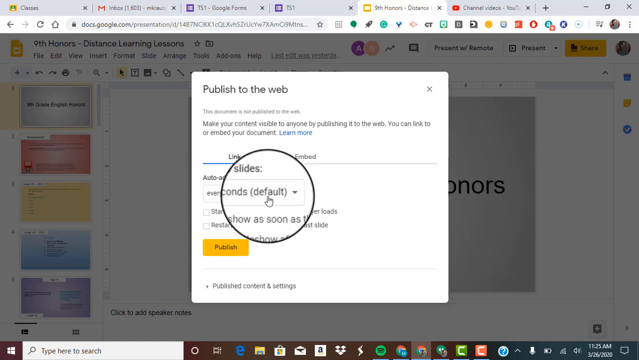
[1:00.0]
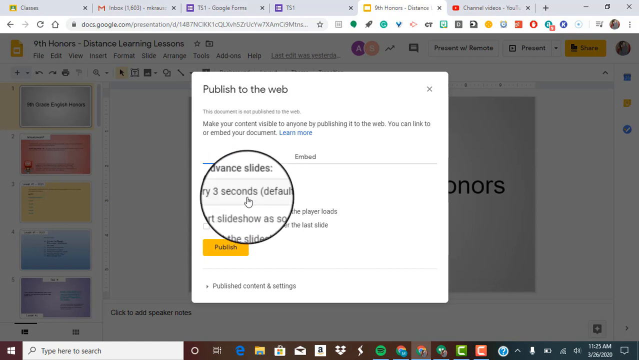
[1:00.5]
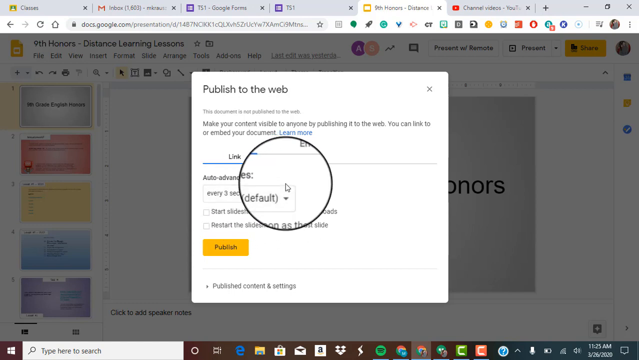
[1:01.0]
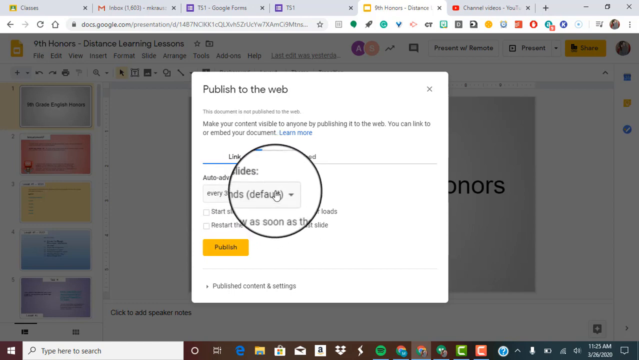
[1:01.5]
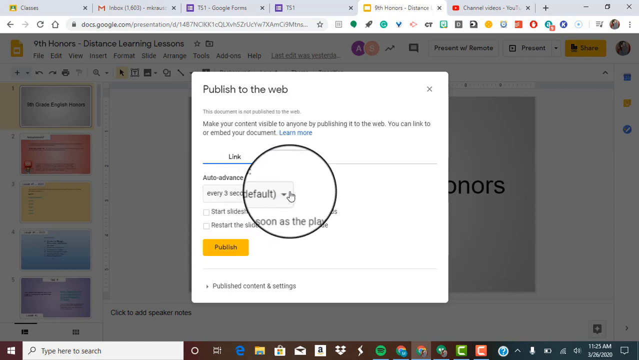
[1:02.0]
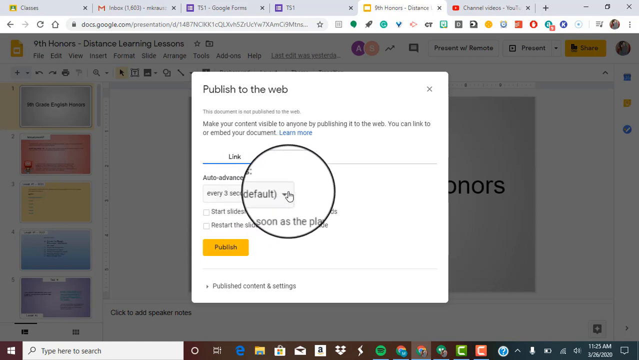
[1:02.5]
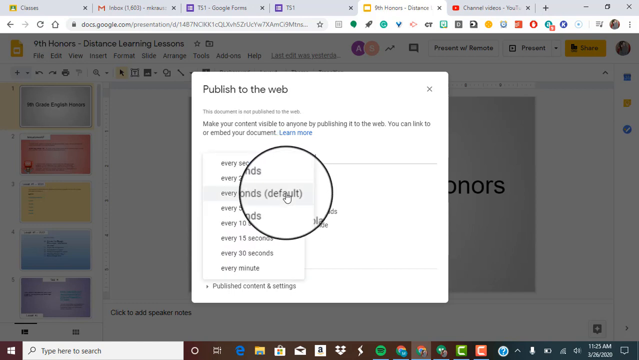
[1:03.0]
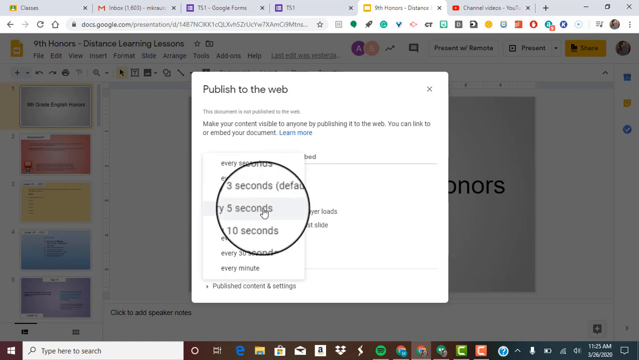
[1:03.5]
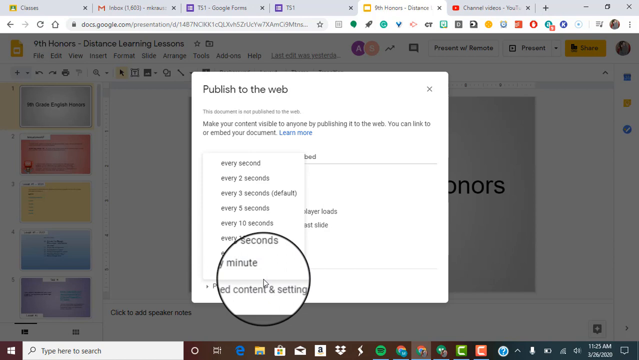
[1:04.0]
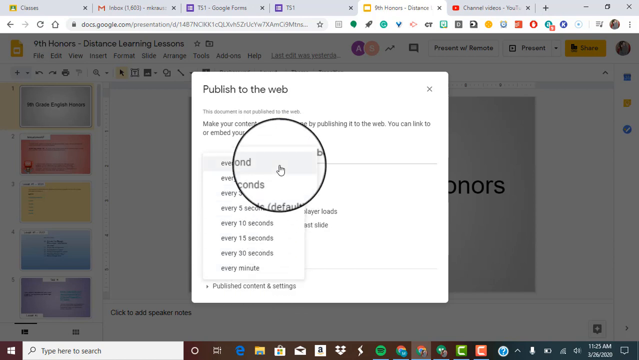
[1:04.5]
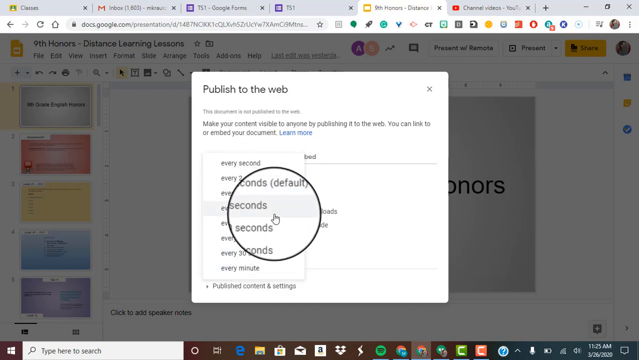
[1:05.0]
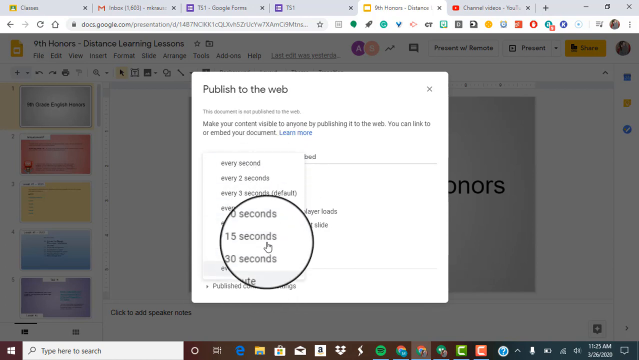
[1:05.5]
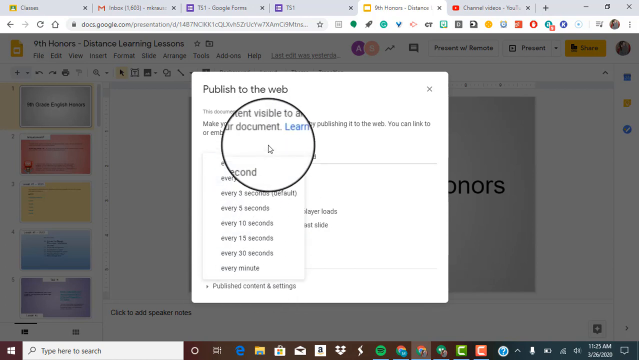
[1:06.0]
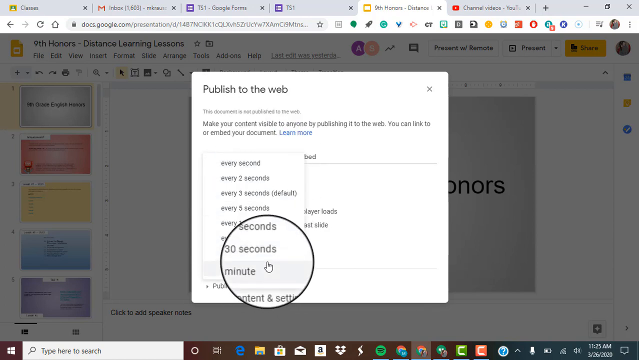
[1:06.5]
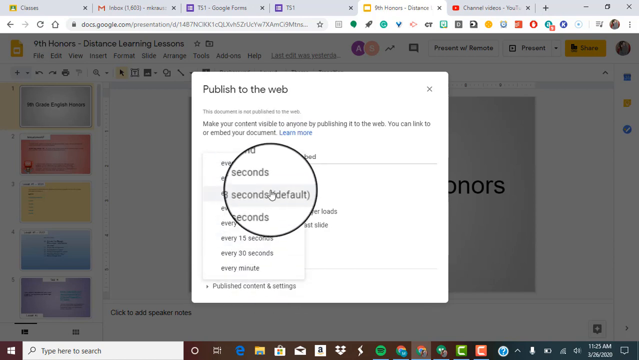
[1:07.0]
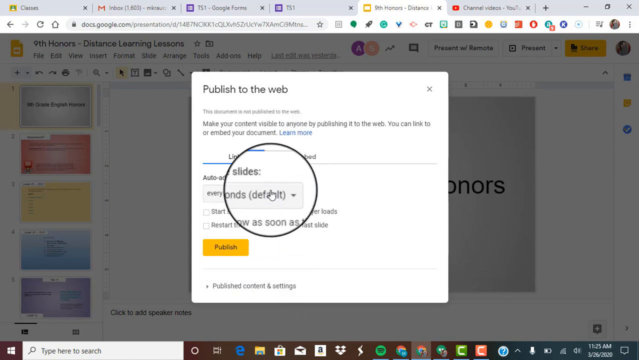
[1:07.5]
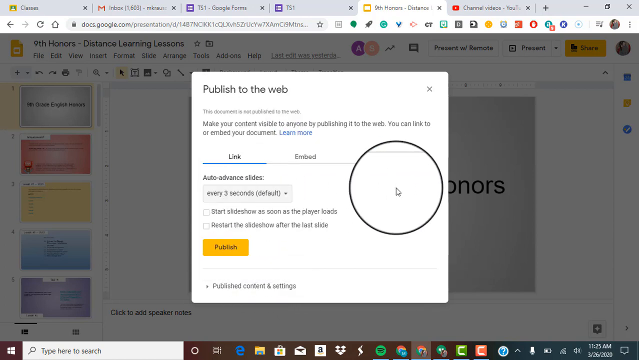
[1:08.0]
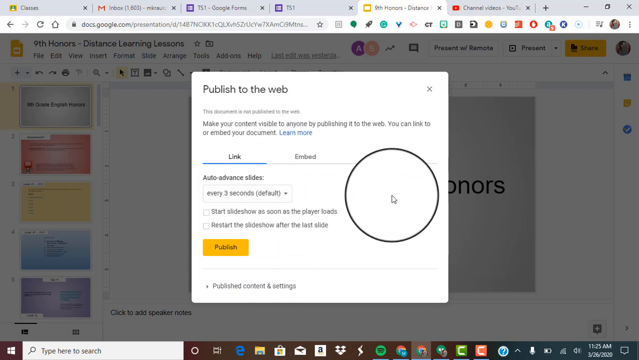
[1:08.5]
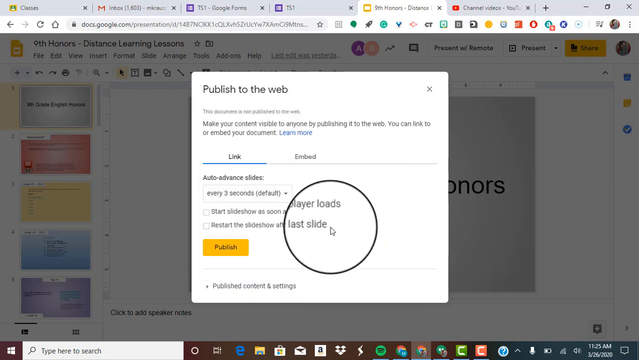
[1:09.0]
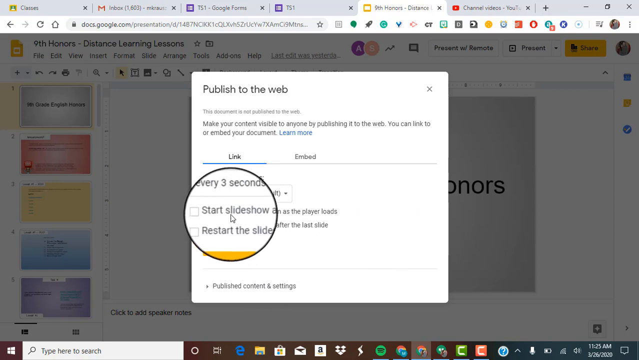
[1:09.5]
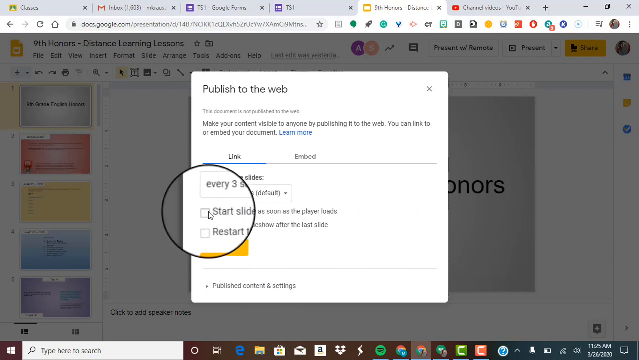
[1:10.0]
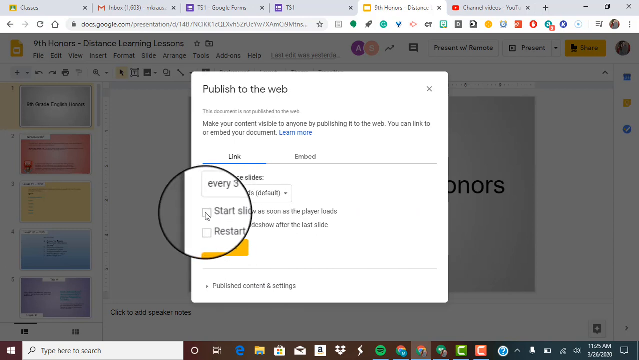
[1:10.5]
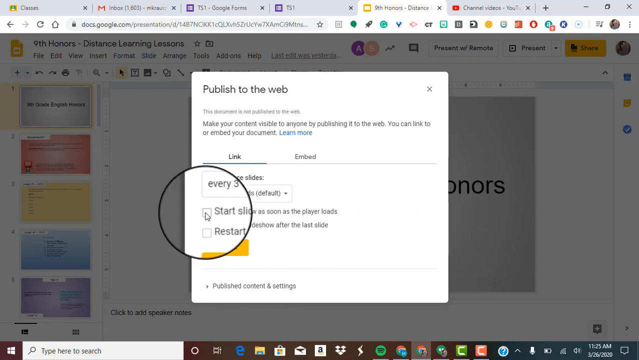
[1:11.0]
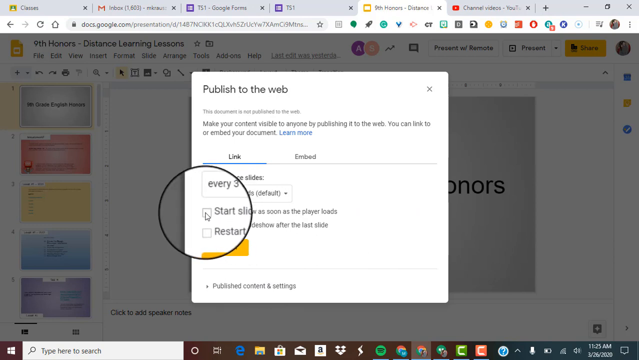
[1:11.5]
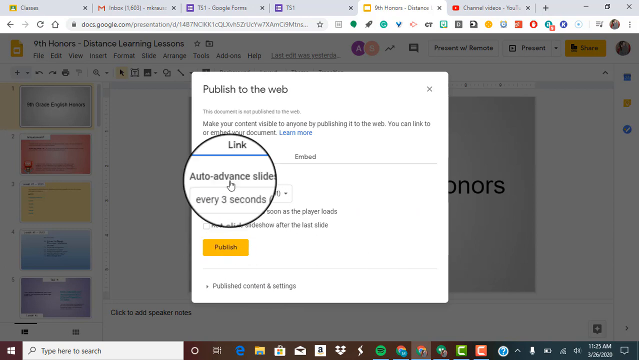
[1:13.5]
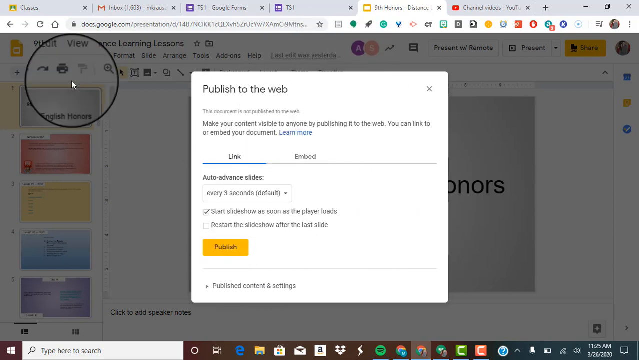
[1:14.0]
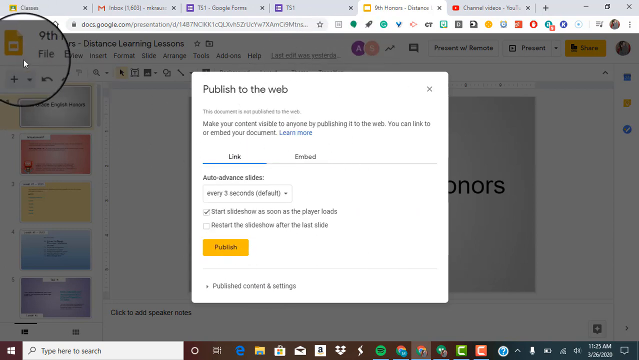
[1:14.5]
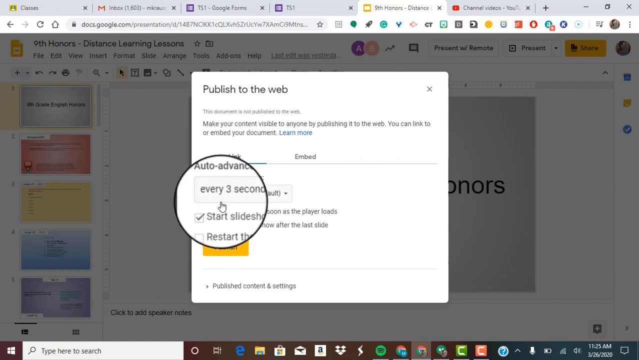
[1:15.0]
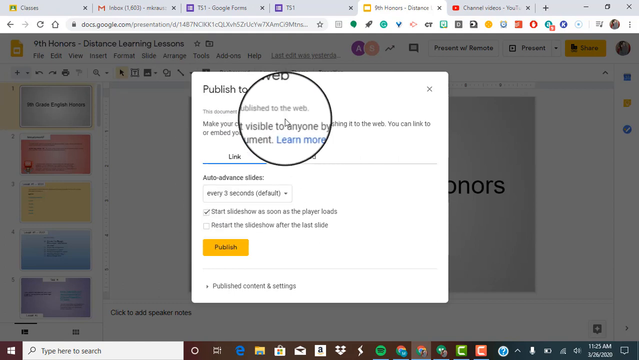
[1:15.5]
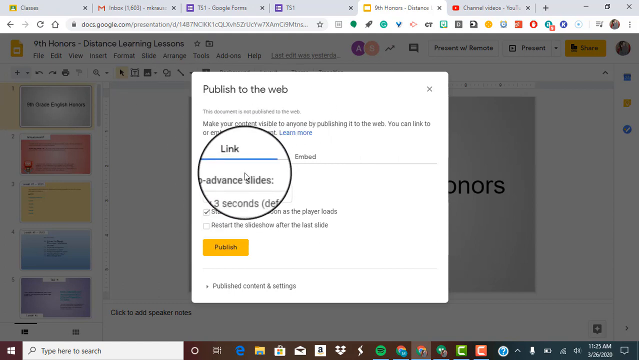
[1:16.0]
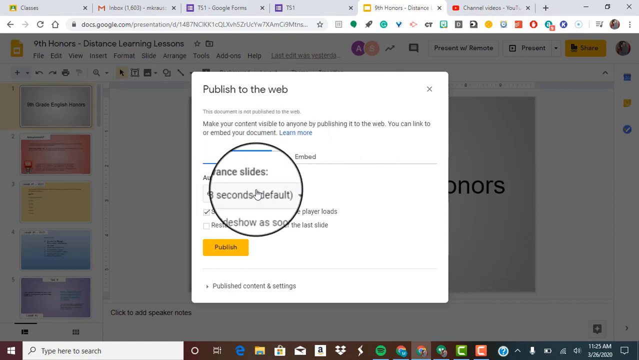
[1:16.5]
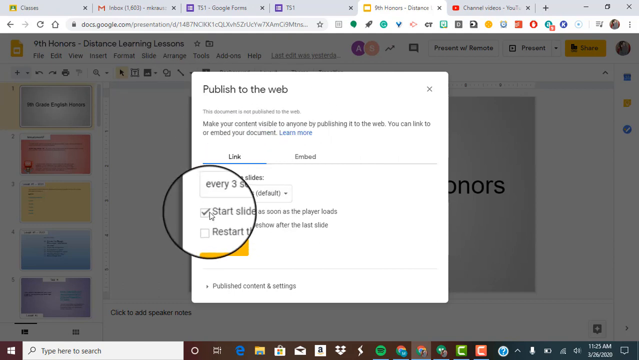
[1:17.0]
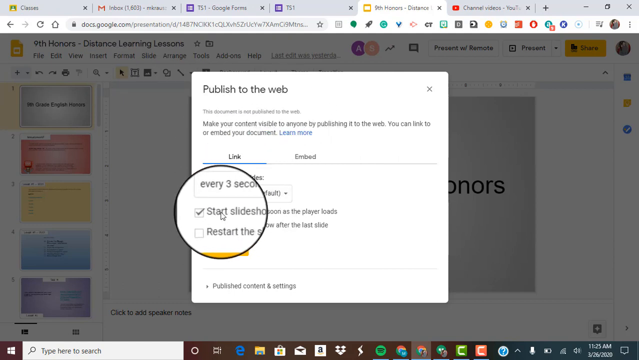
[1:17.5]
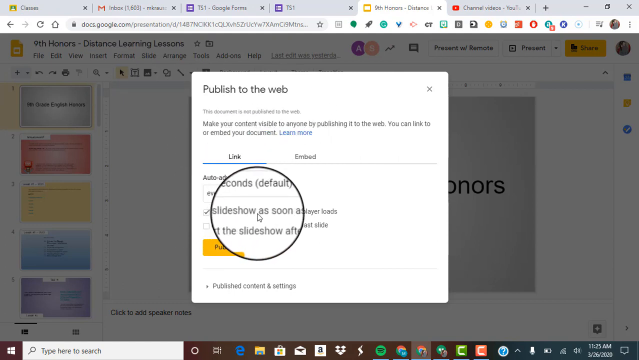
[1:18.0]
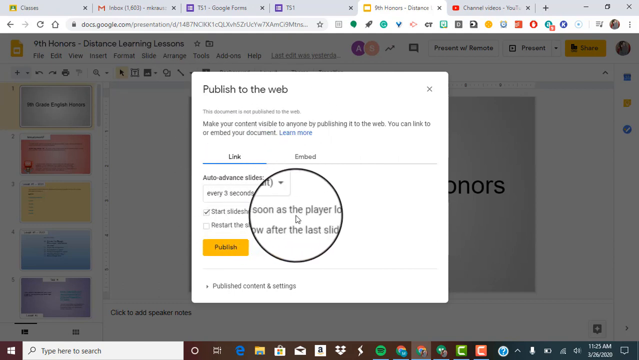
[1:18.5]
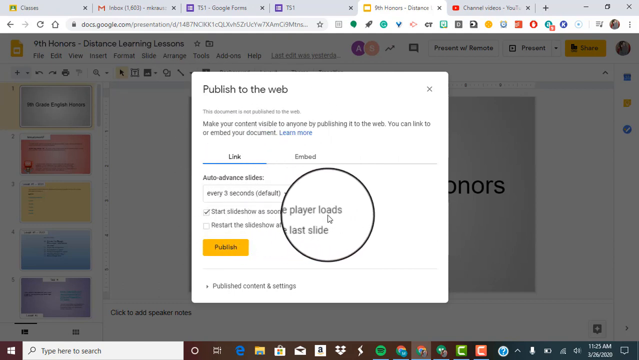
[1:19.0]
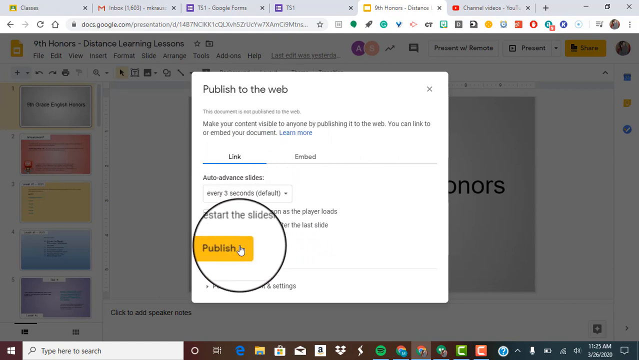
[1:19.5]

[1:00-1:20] A Google slide is open in Google Chrome, with the mouse inside a transparent circle outlined by a thin black line. A box titled "publish to web" has popped up. On the left-hand side are several different slides in red, yellow and blue, and part of one slide with a gray background and some black text is visible, though not all of it can be read. The mouse is on a setting reading "every three seconds default"; a little downward-pointing arrow is clicked and the mouse moves up and down over the different options several times. Then "every three seconds" is clicked, followed by an option reading "start slideshow as soon as the player loads," and the mouse passes over that option from left to right, showing clearly that it has been chosen.